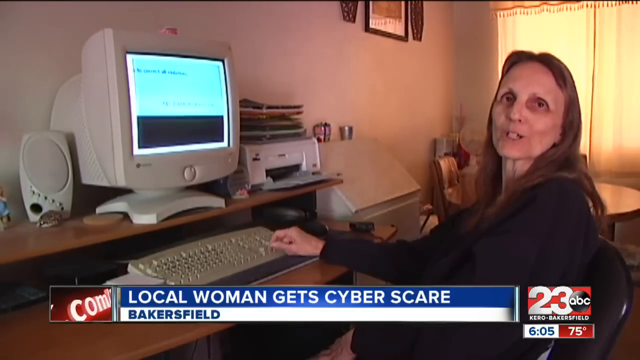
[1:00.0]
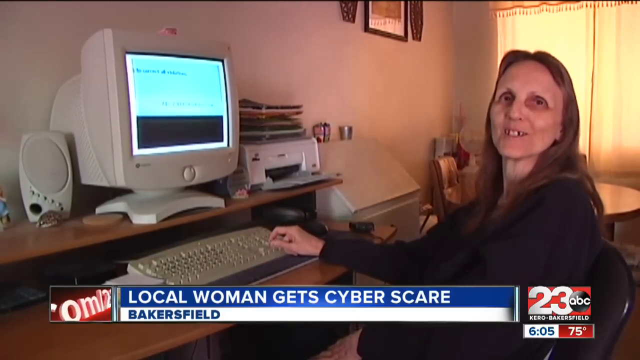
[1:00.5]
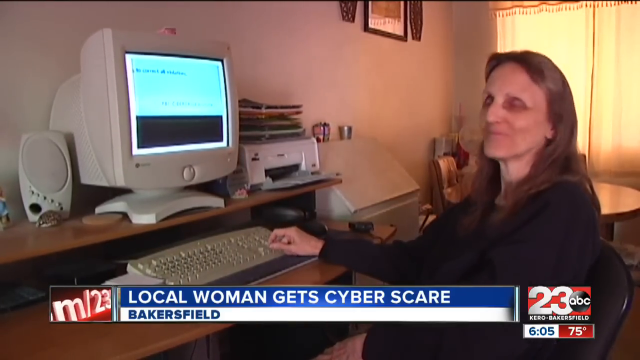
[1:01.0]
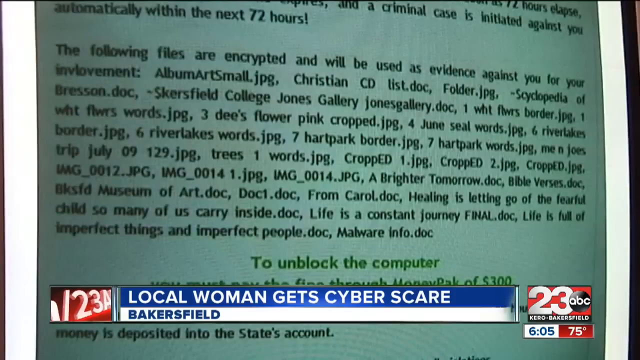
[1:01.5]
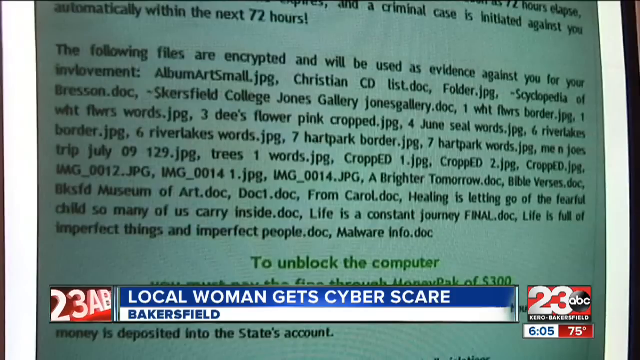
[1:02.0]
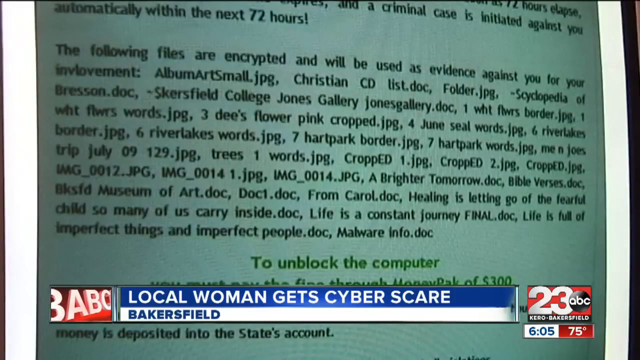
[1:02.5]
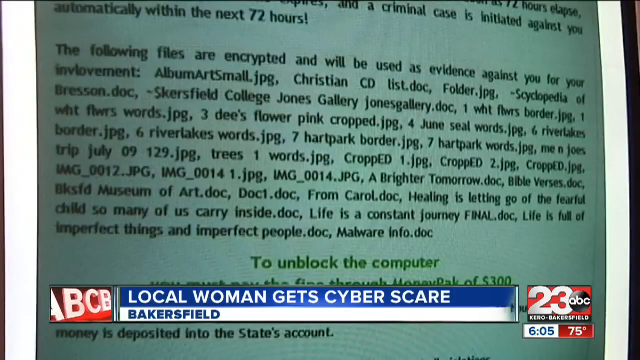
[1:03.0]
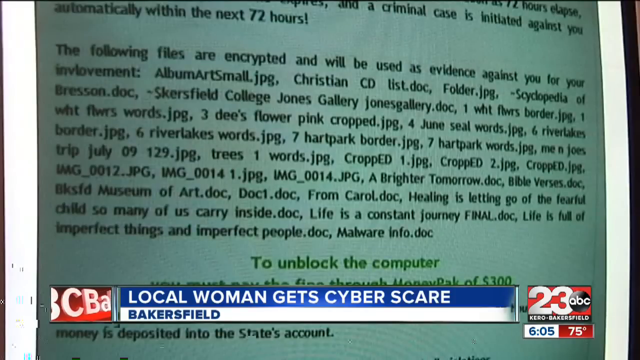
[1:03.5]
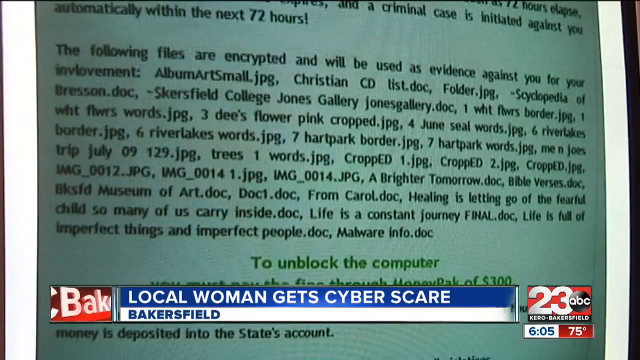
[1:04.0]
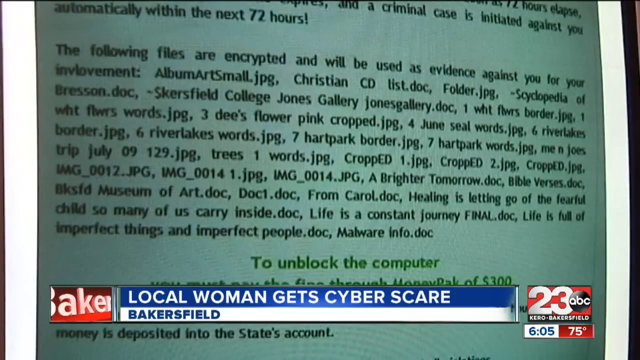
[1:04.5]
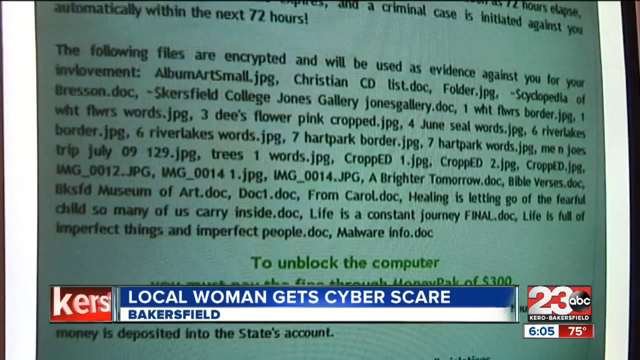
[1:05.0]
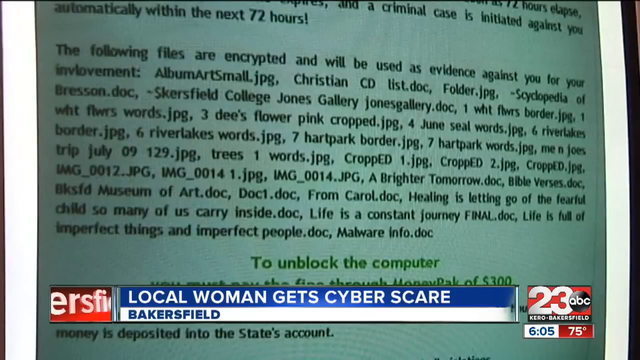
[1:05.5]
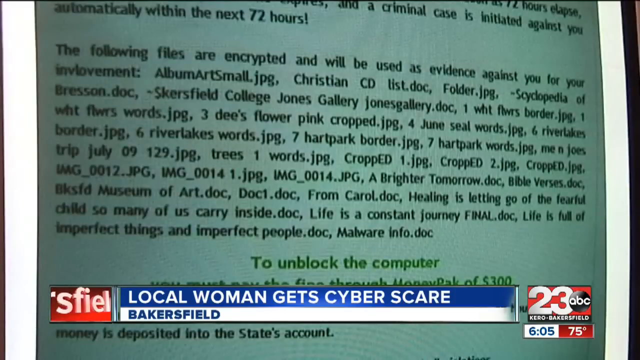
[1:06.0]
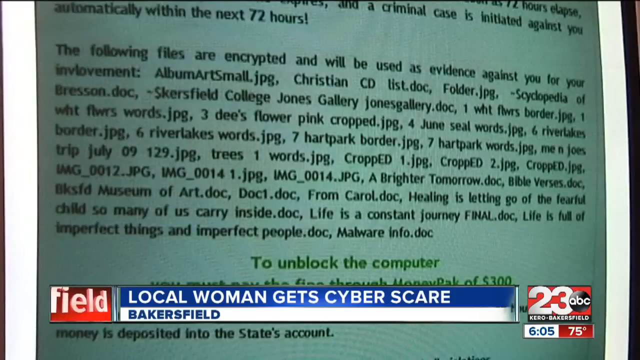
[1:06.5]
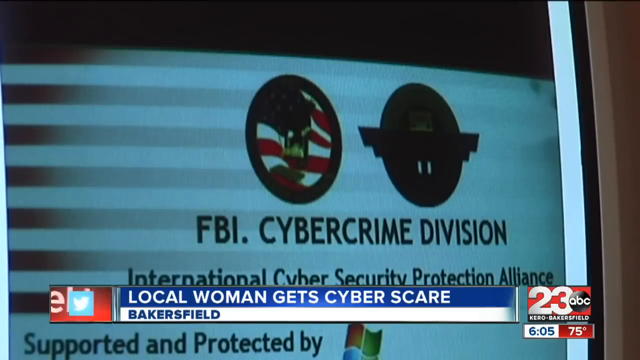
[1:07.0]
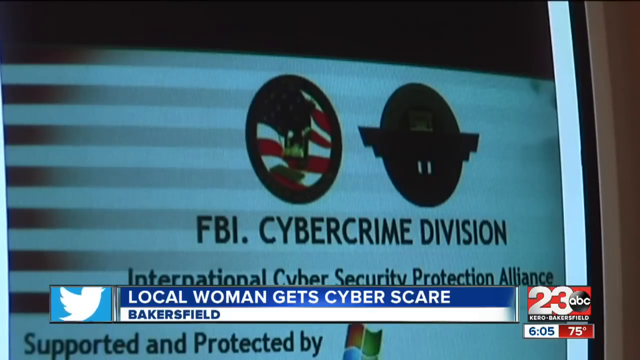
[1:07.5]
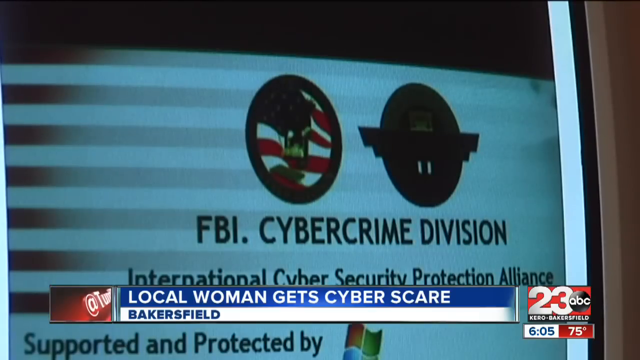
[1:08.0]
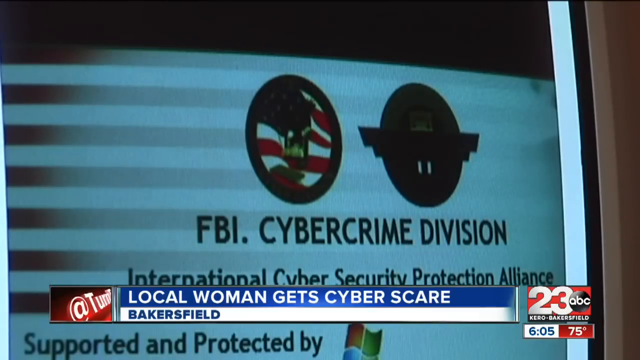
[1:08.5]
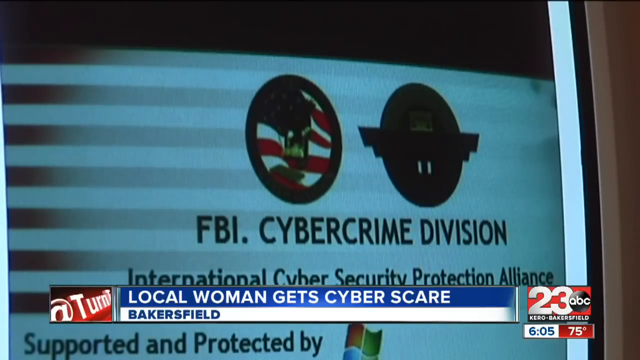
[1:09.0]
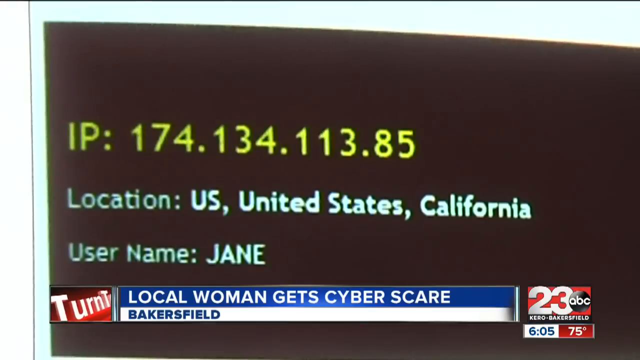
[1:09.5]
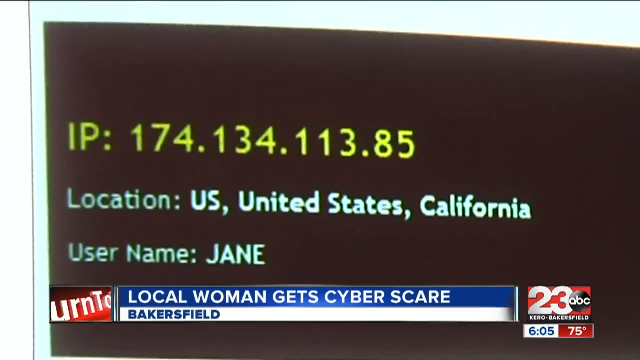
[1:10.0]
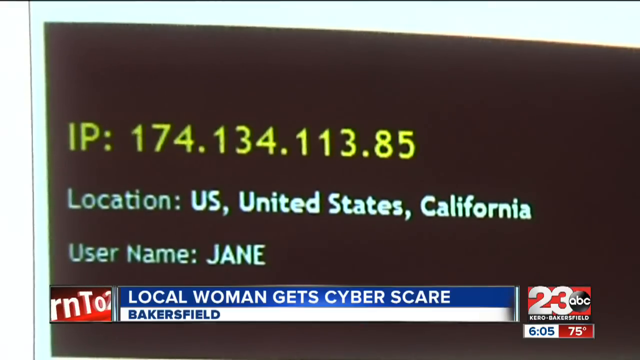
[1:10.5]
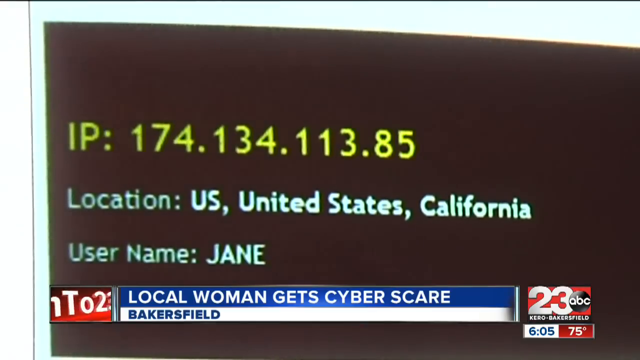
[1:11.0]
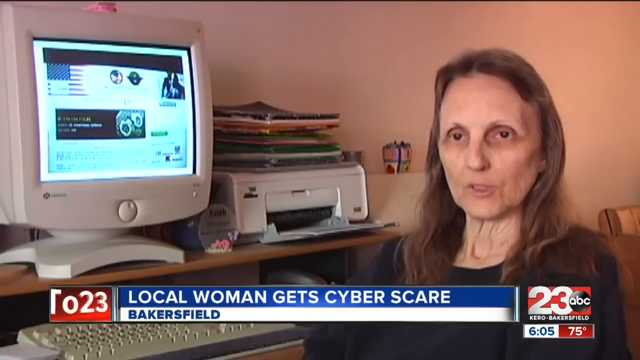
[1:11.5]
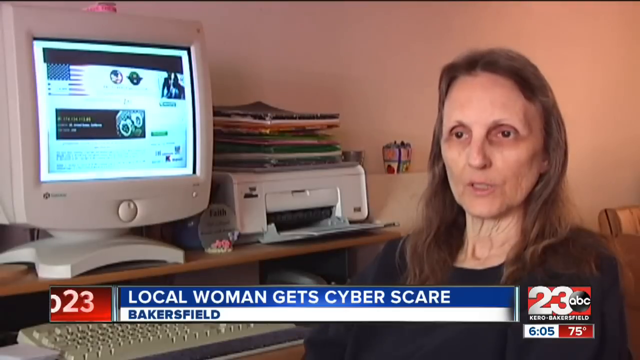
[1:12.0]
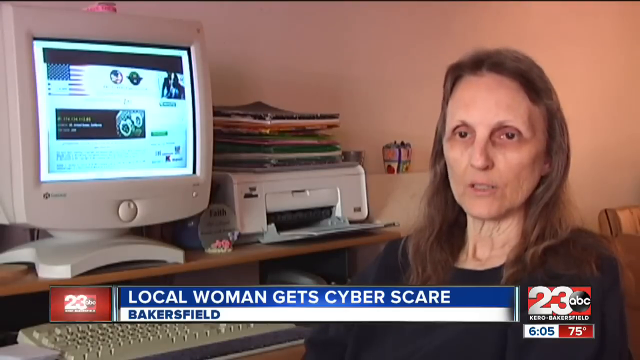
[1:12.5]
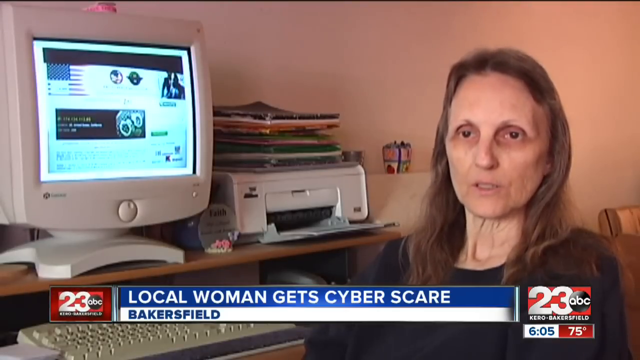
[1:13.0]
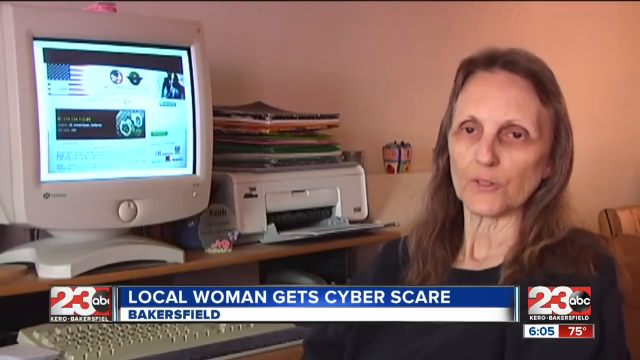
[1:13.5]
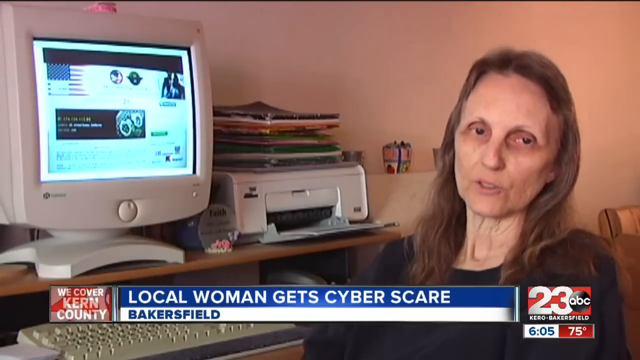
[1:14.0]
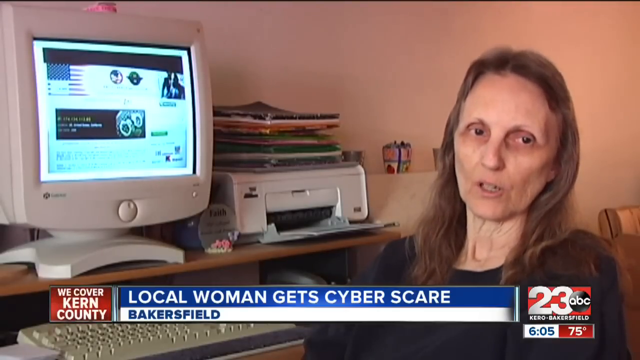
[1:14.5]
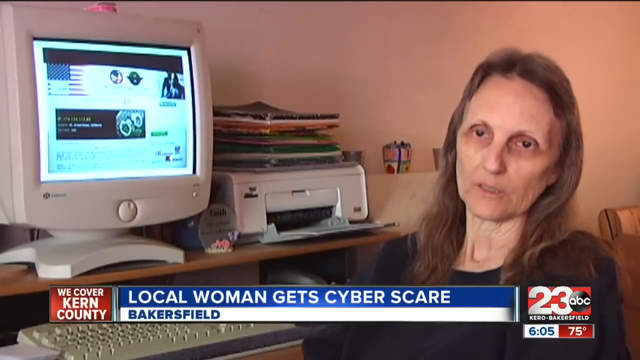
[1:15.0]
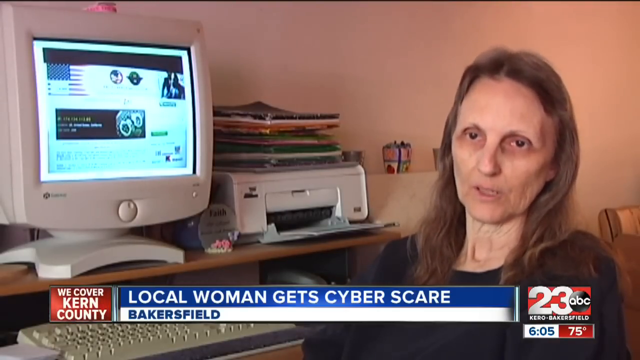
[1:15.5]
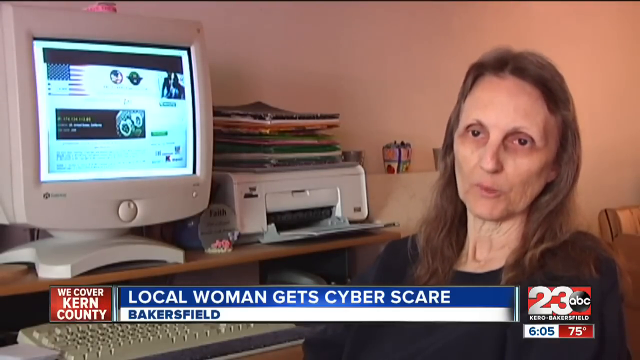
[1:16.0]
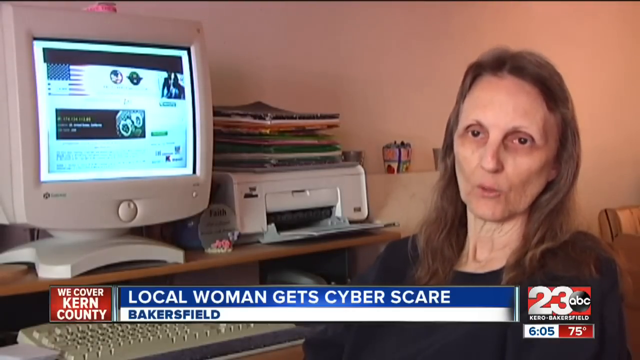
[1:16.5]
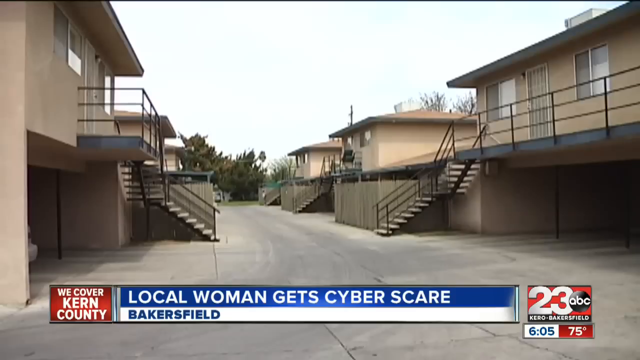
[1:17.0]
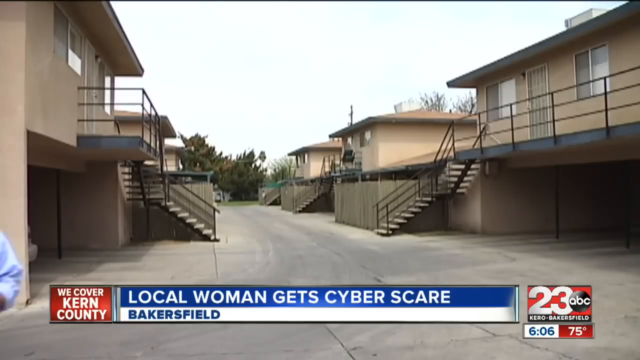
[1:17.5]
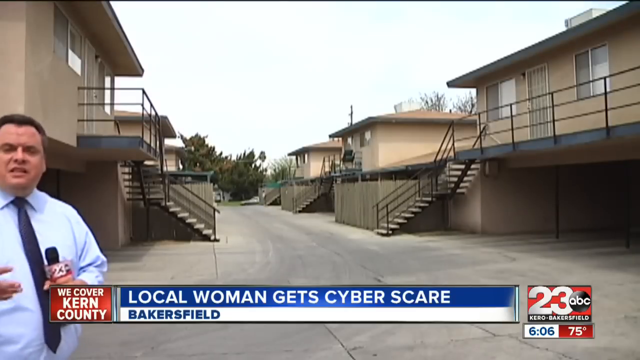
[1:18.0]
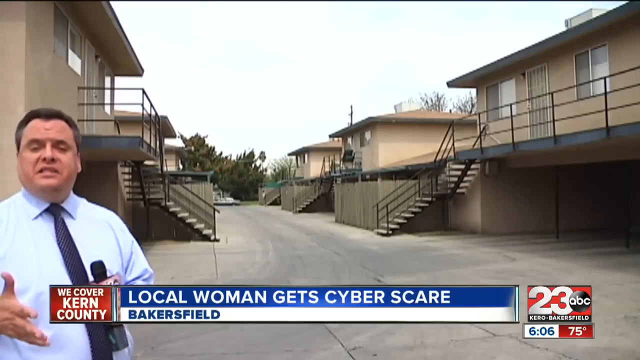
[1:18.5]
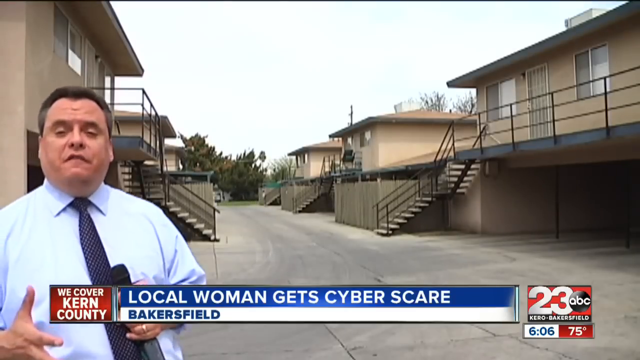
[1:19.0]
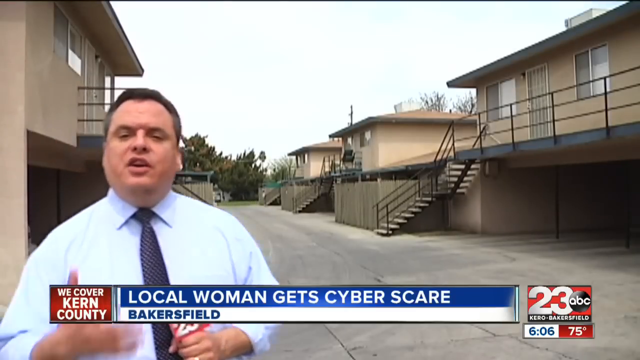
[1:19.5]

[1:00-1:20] The scene is at the home of someone who was almost a victim of cybercrime, covered by ABC channel 23 in Kero, Bakersfield, whose logo is at the bottom right of the screen, with the time, 6:05, and the temperature, 75, underneath. The headline at the lower middle of the screen reads "Local woman gets cyber scare," with "Bakersfield" underneath. The woman, maybe in her mid-60s, with darker hair and darker eyes, is at her desk with a computer whose screen is on. Part of the screen reads: "The following files are encrypted and will be used as evidence against you for your involvement."